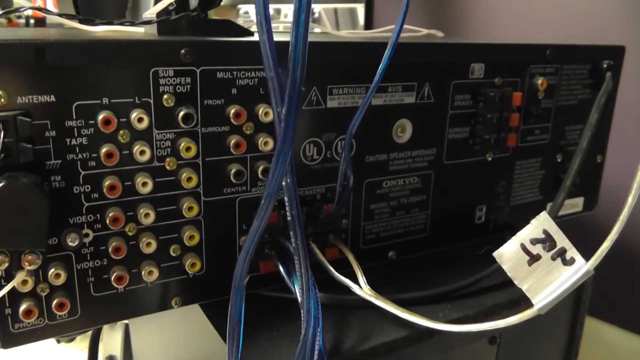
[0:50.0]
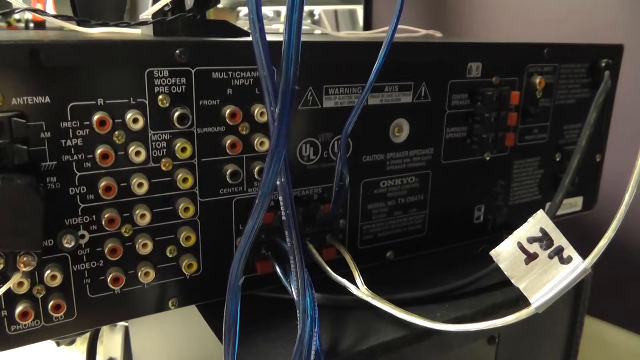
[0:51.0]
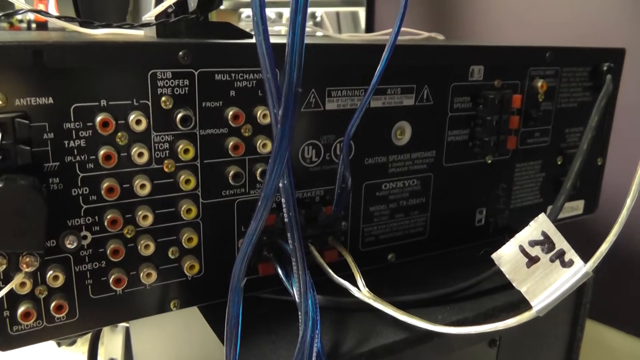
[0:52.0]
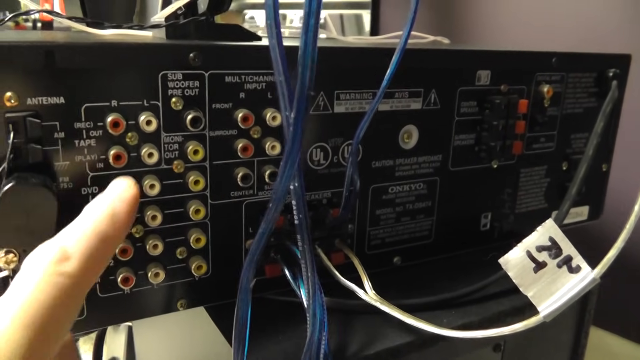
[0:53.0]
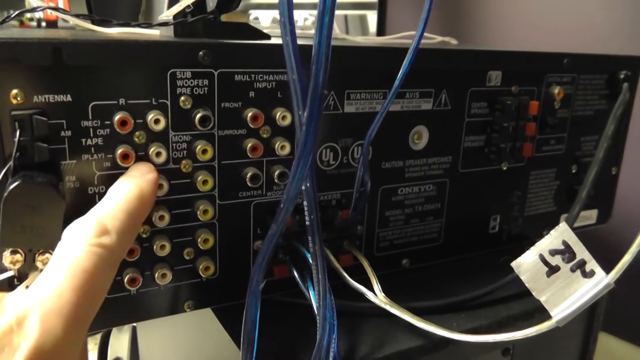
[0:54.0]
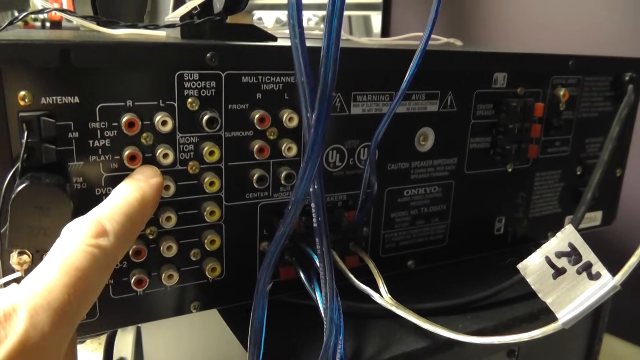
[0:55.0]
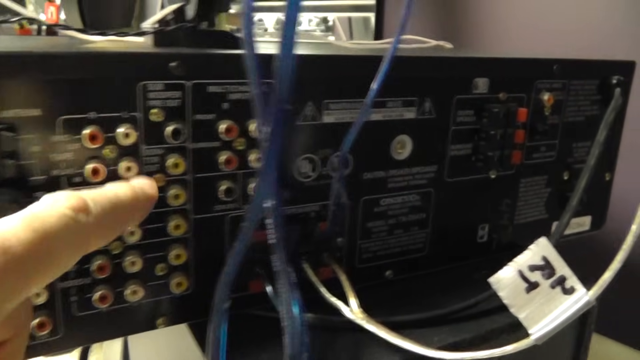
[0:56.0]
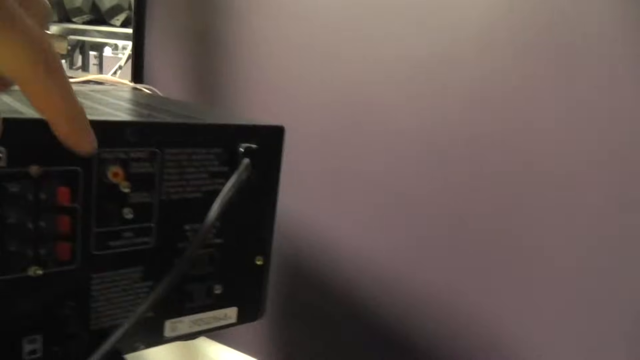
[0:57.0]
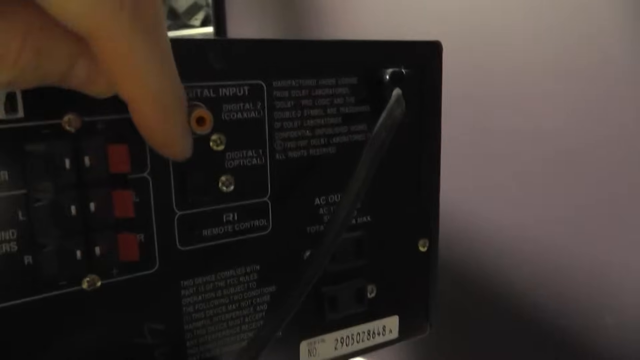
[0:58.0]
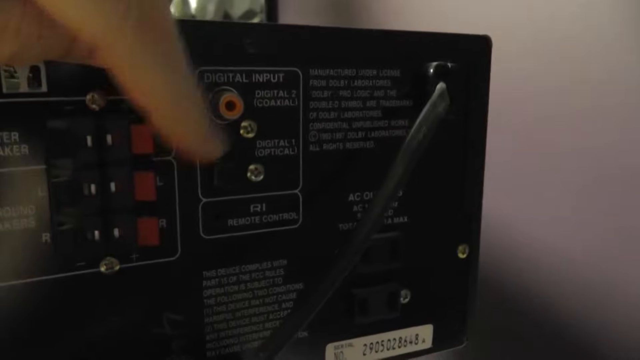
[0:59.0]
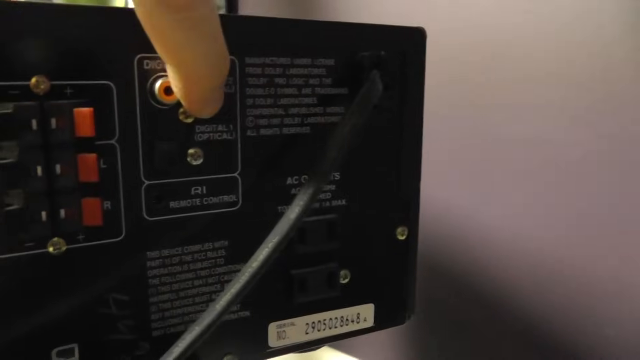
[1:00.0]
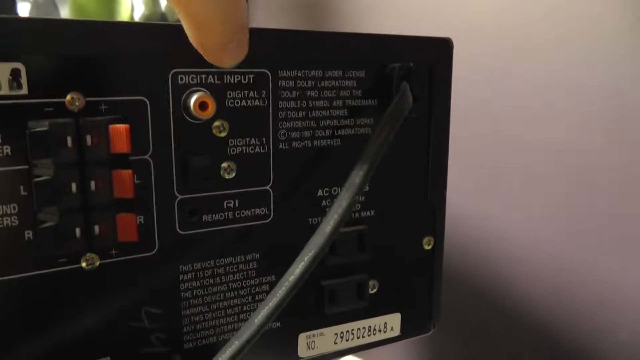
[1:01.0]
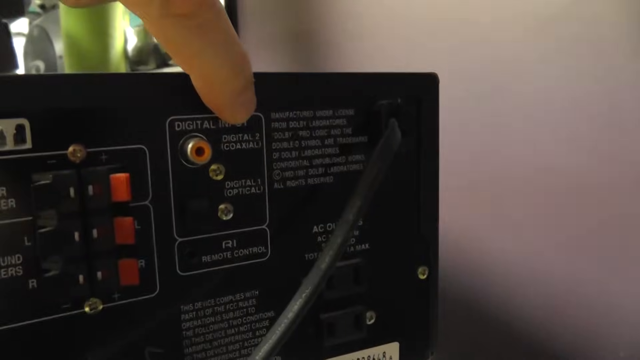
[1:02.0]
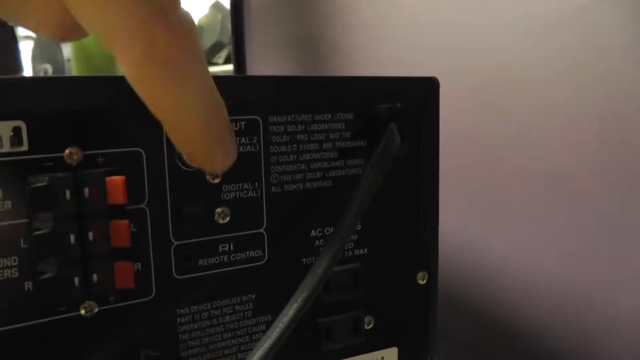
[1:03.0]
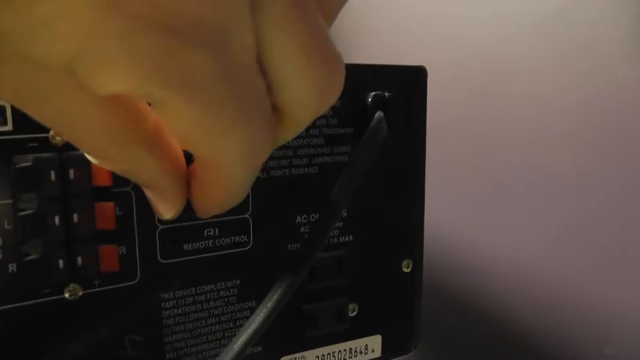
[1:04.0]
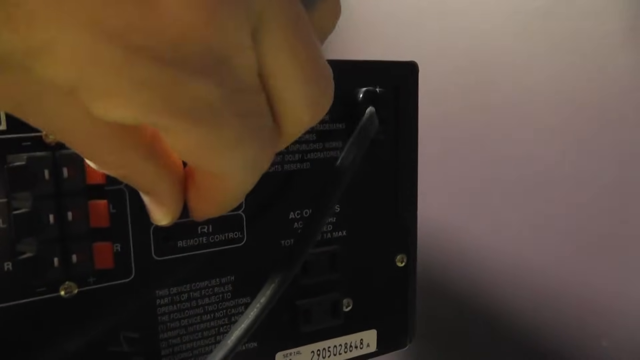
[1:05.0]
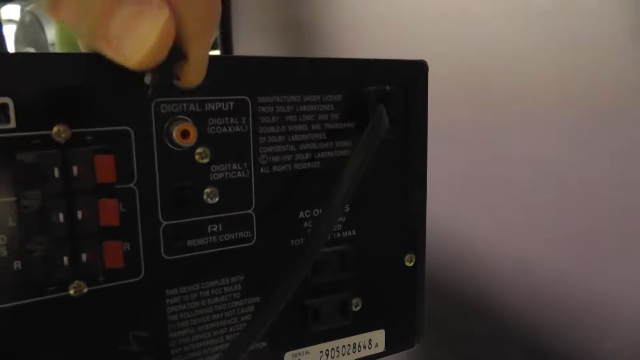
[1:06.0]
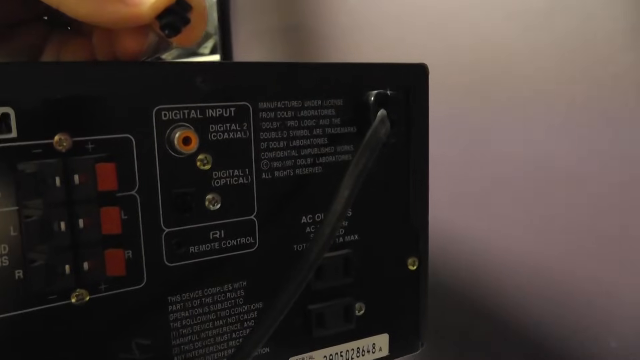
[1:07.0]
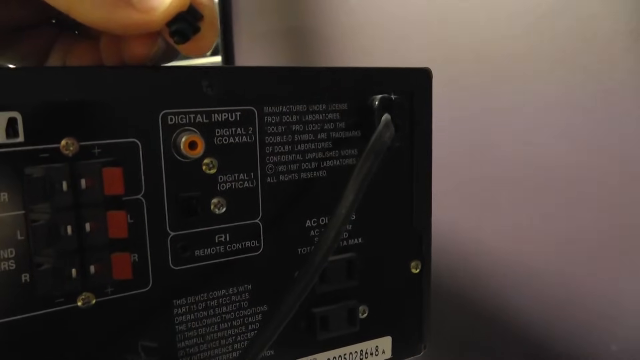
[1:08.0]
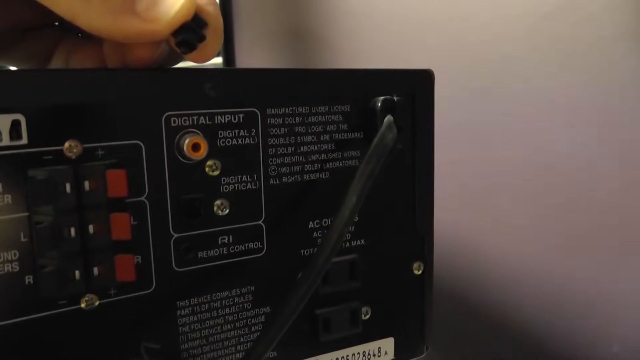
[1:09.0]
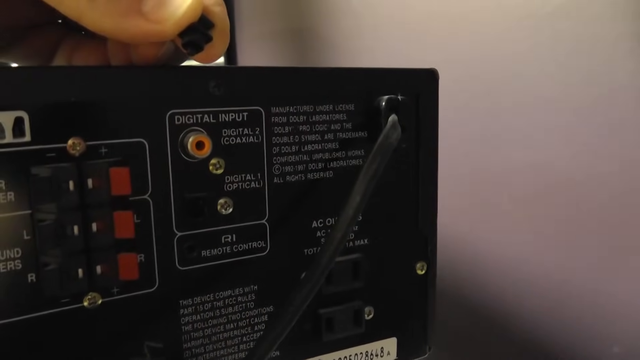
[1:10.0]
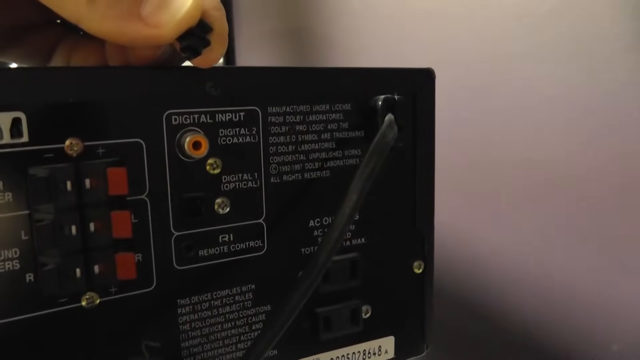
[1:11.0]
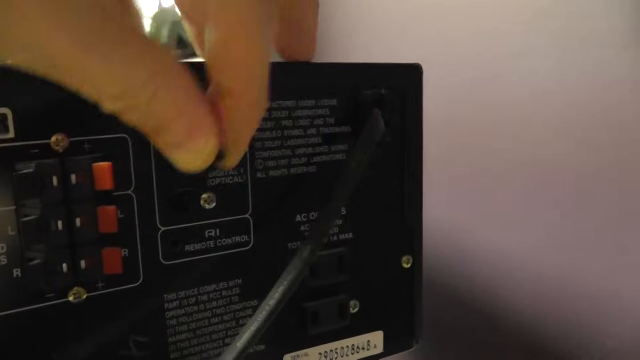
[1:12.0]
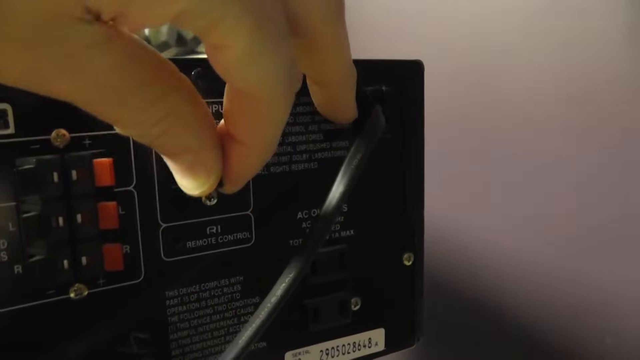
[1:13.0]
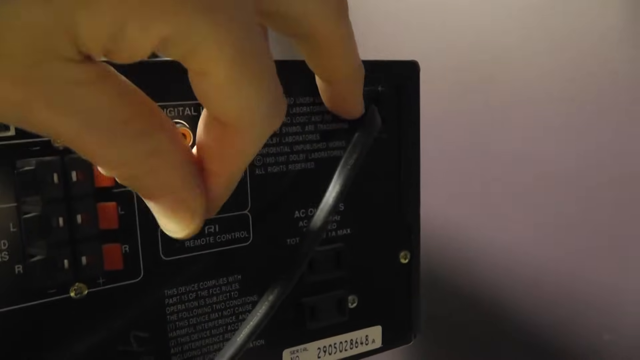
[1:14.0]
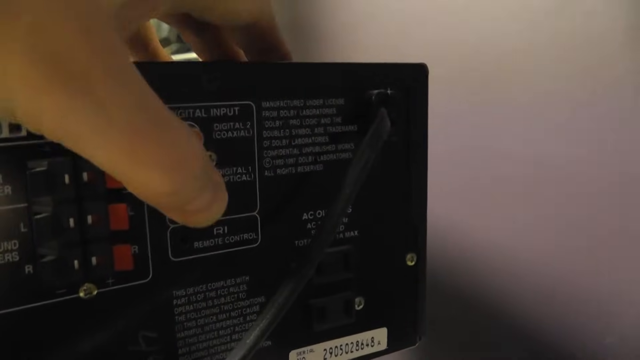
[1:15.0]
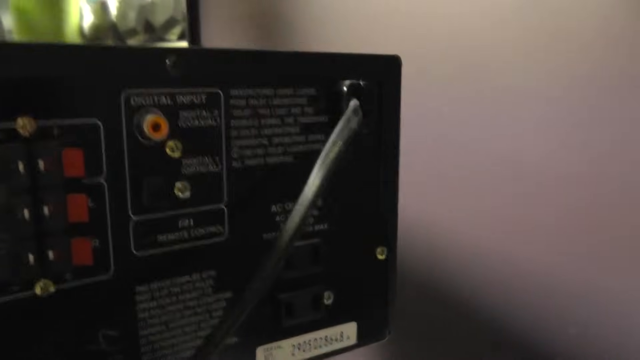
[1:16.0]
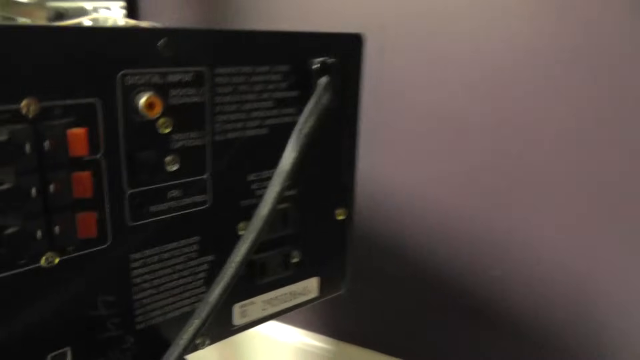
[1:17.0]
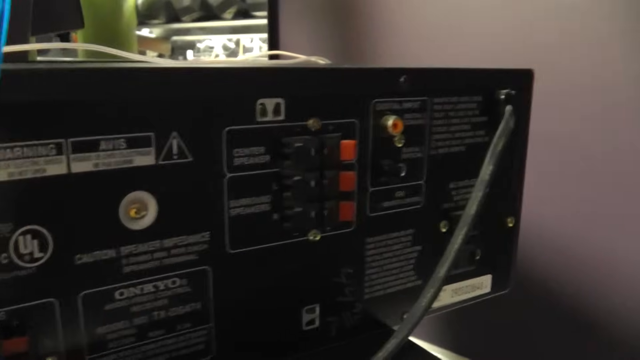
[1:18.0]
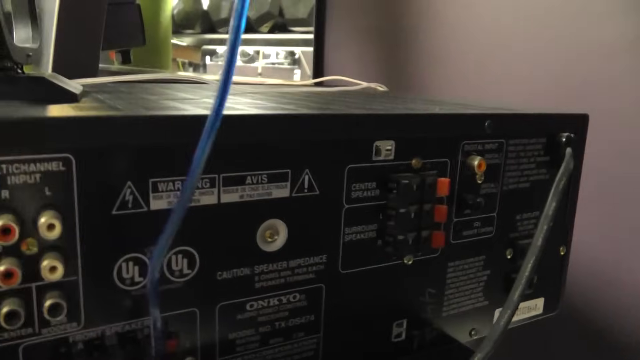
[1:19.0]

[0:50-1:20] The device is on a table. He points to the red and white plug-ins, moves the cords, and comes over to the far right of the object, where he looks at a digital input with a reddish plug-in cable and two screws. He has taken off a black knob underneath the red plug-in cable to show where other objects could plug in. To the left of that cable is another square panel that looks screwed in. Looking up toward the top, more objects are on the table behind the console, and there appears to be a window. The console appears to be in a corner, with a shadow where the corner would be. The window is very bright, and building tops can be seen out of it. To the left of that is something like white paper or white cloth with little red and blue circles on it, with a cord running on top of it that has red, white and yellow on it. Coming down the console, it says "antenna" and also "subwoofer pre-cut". There is a metal panel with a screw and a silver plug-in, and it says "right" and "left".